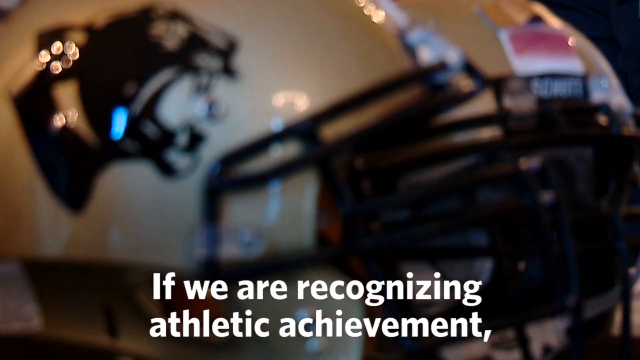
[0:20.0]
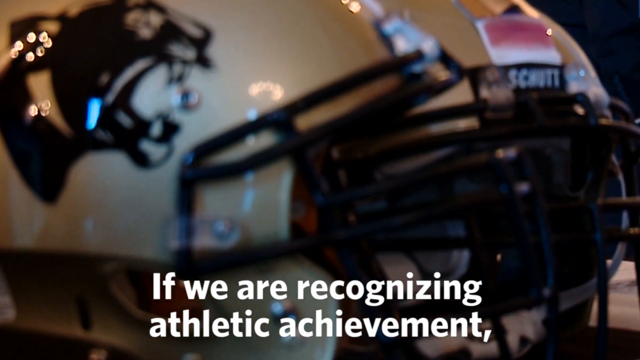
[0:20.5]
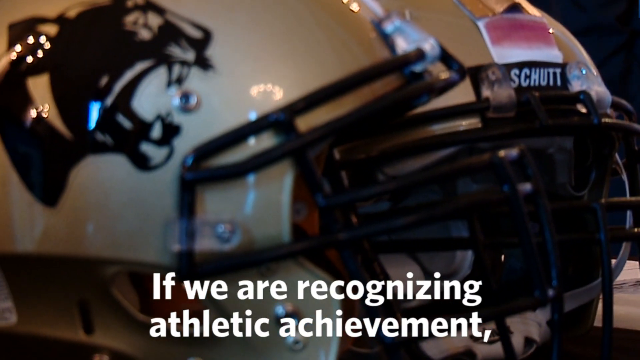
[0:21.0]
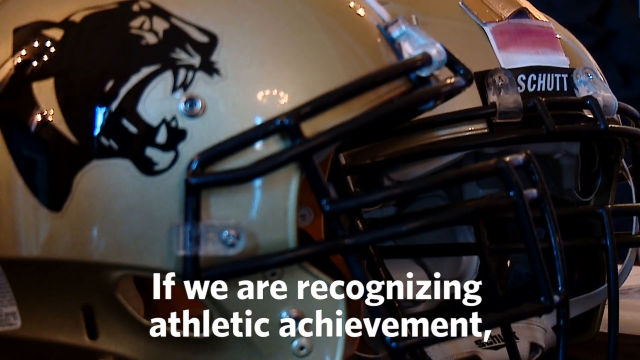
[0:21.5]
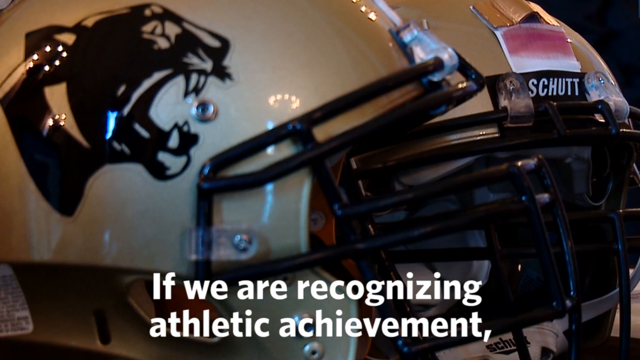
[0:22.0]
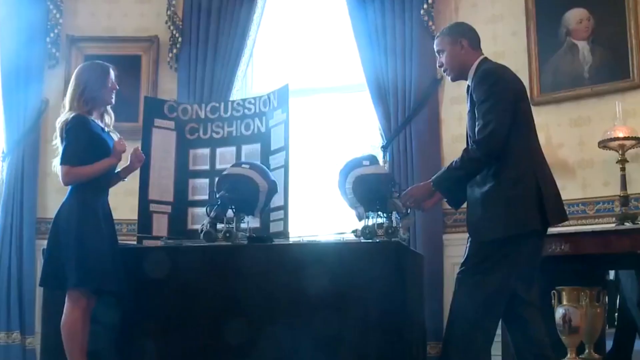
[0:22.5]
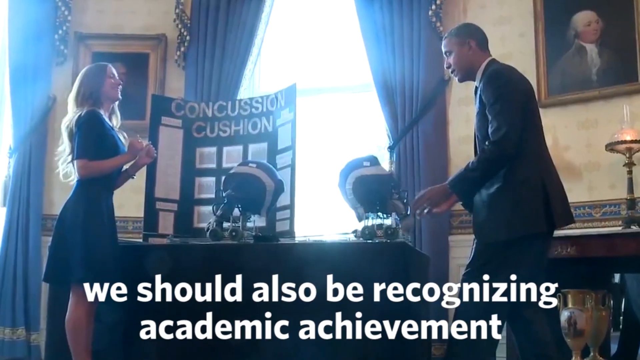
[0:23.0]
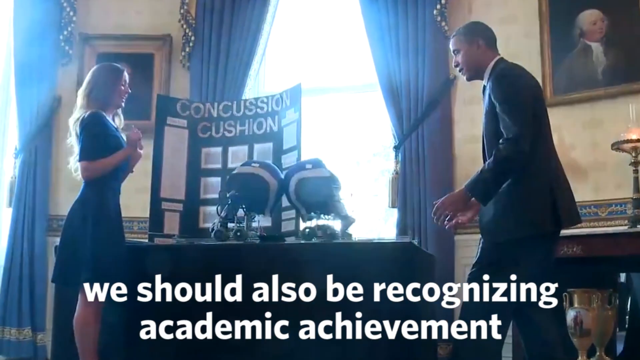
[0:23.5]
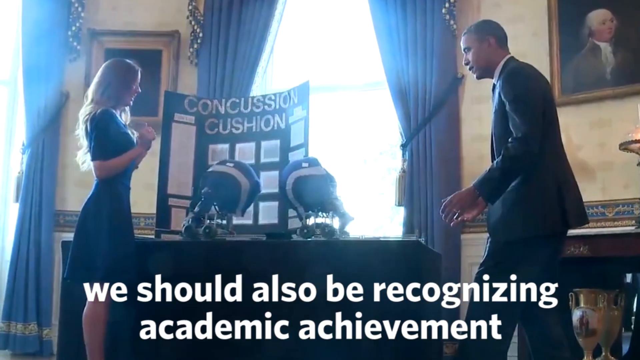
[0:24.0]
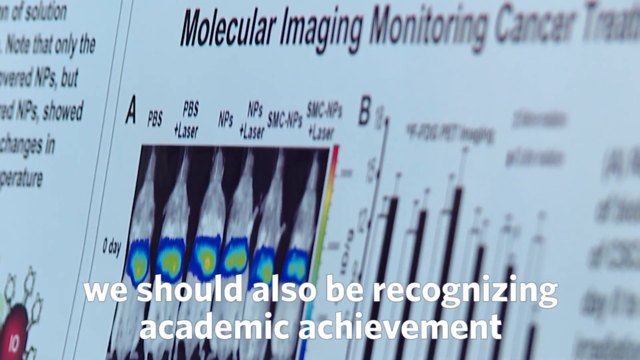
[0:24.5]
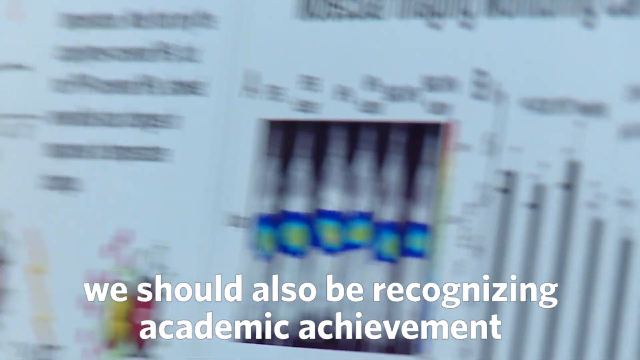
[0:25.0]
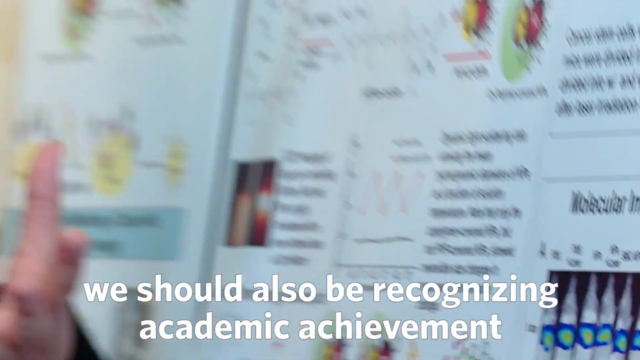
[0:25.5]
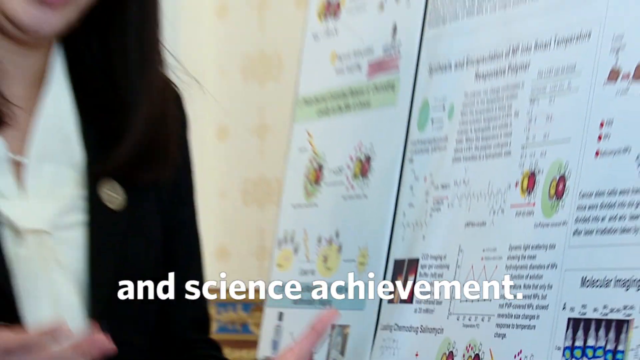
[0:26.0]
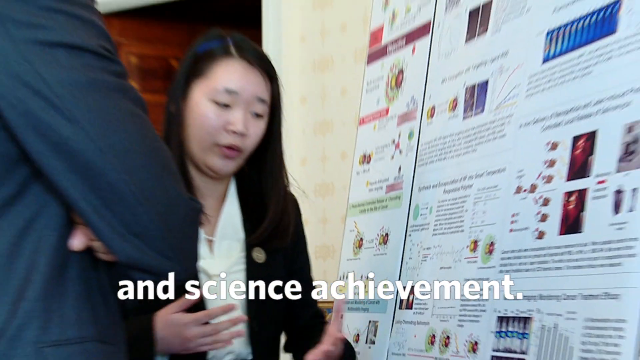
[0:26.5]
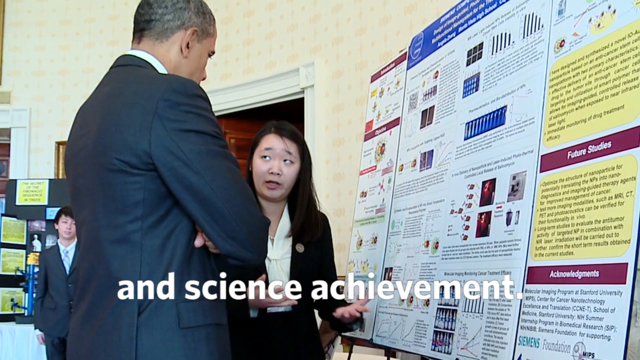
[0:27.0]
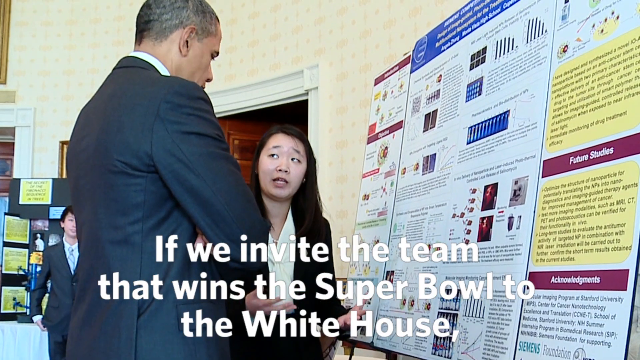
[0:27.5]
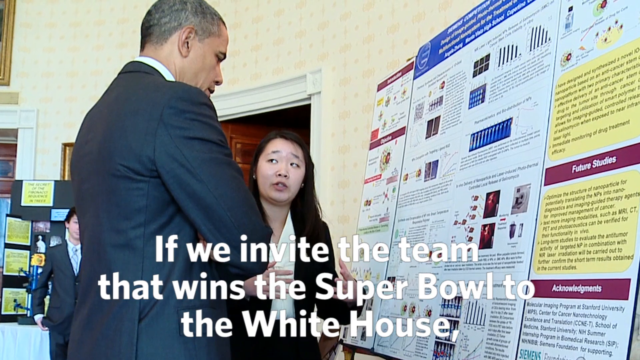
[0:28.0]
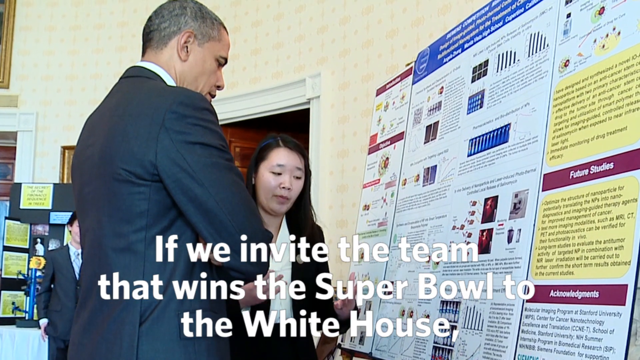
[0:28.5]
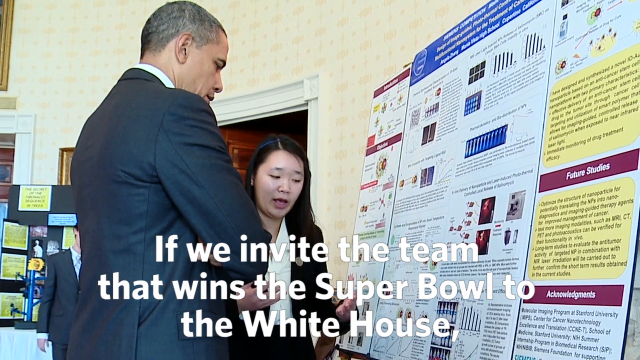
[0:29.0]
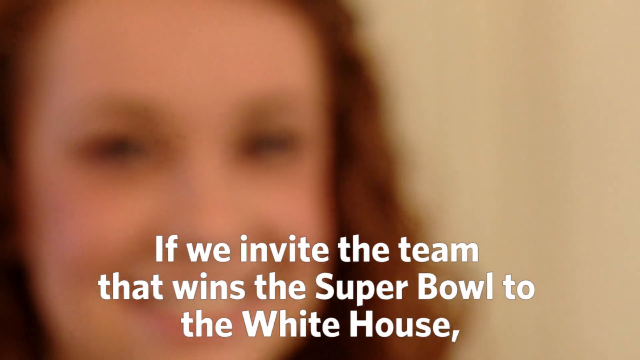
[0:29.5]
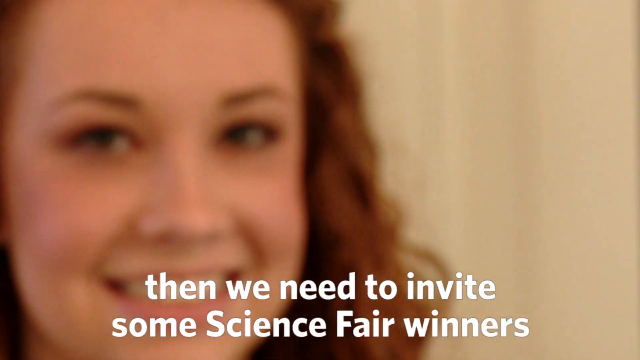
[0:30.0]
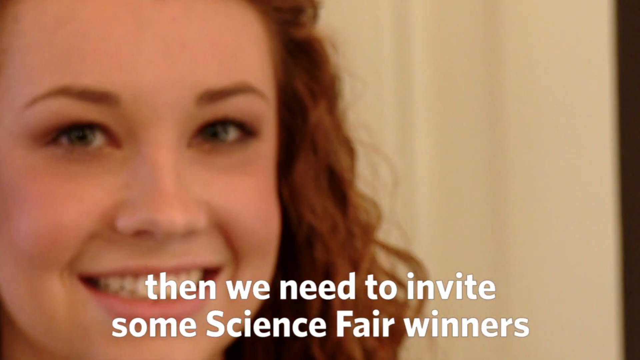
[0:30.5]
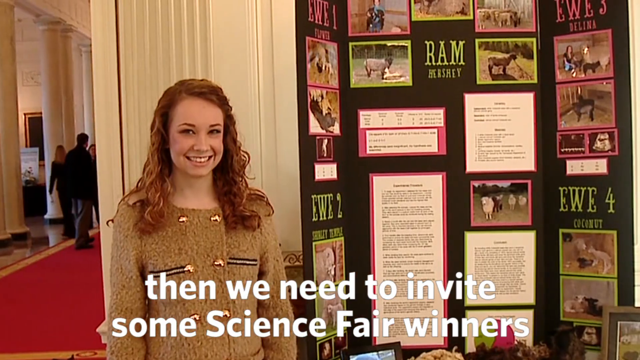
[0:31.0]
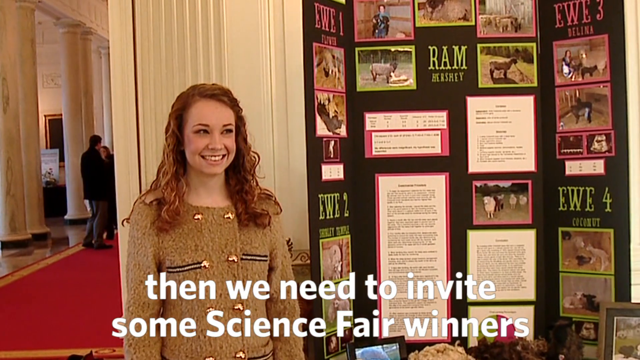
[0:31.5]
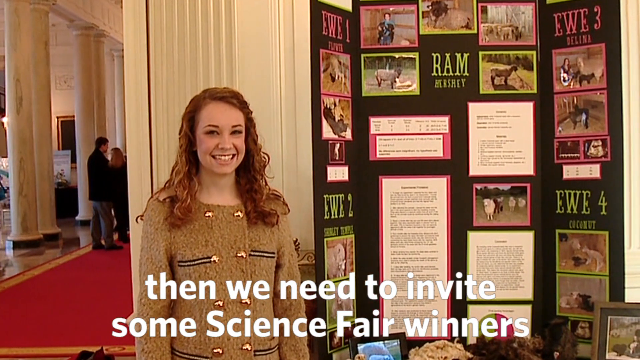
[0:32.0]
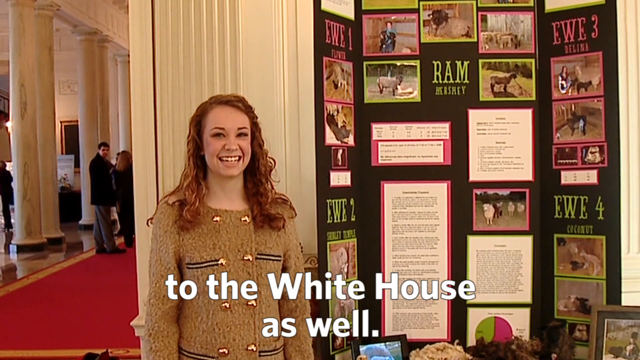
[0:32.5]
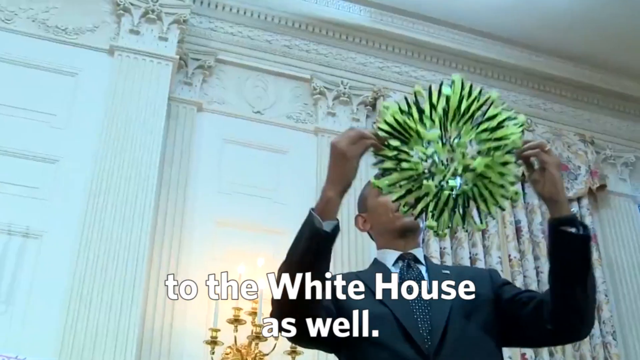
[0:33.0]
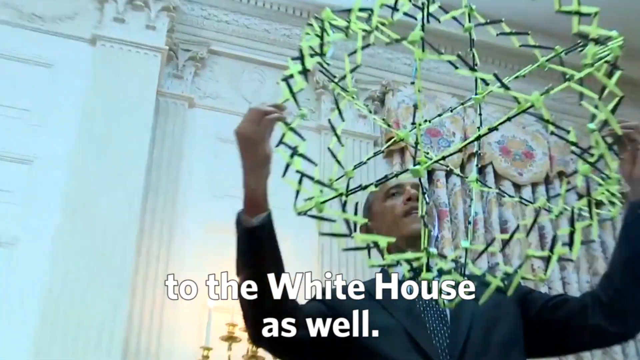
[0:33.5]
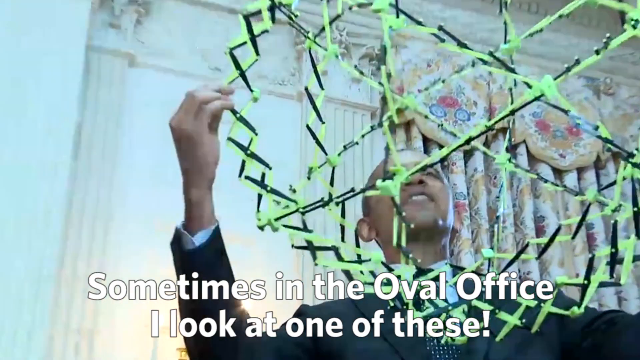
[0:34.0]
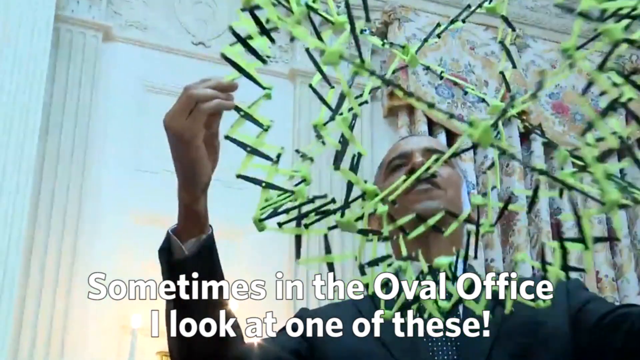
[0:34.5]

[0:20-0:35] At the Oval Office, President Barack Obama acknowledges the achievements of high school students who have done science fairs. Some of the students talk directly with him as he converses with them, and some have their pictures taken. Obama plays with a large ball that can be extended outward to make it even larger. Some students have made poster boards and stand in front of them to have their pictures taken. Obama recognizes science fair winners and also recognizes some students' athletic achievements. Some of the students in the pictures are girls. Helmets are seen hitting each other, and Obama laughs.